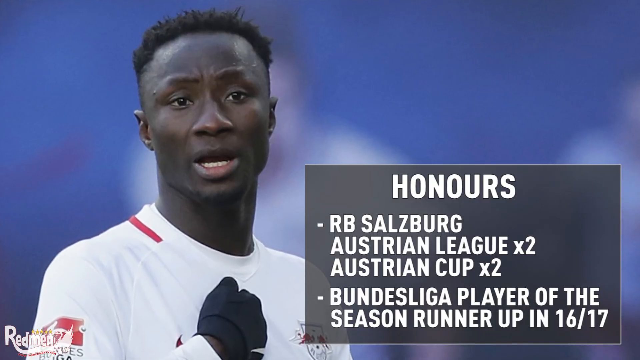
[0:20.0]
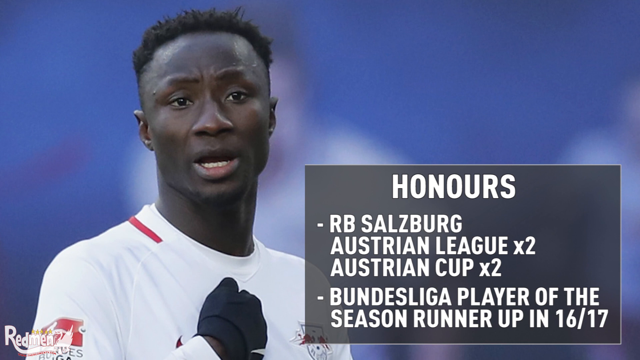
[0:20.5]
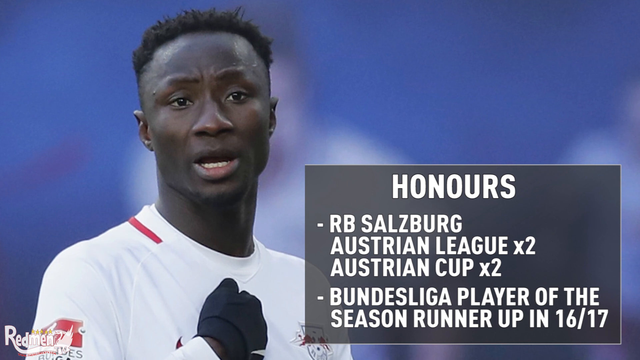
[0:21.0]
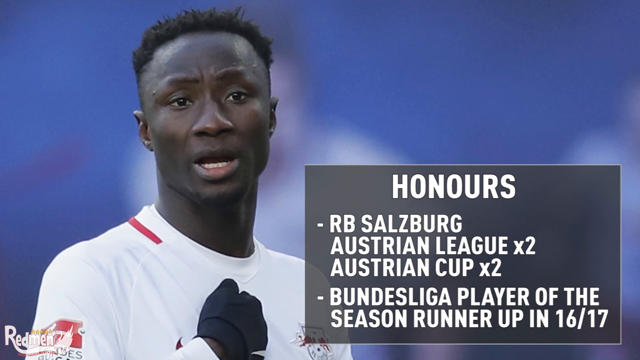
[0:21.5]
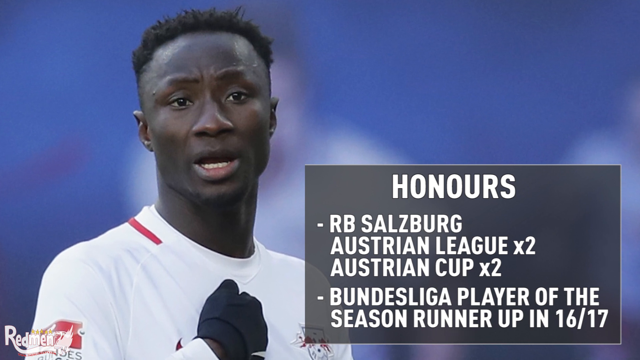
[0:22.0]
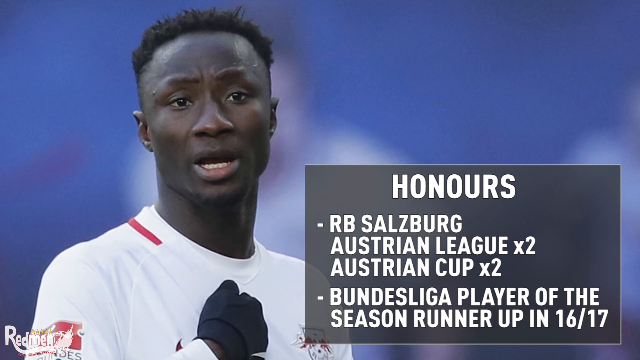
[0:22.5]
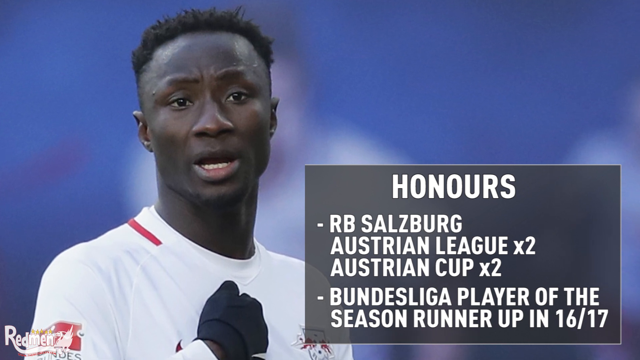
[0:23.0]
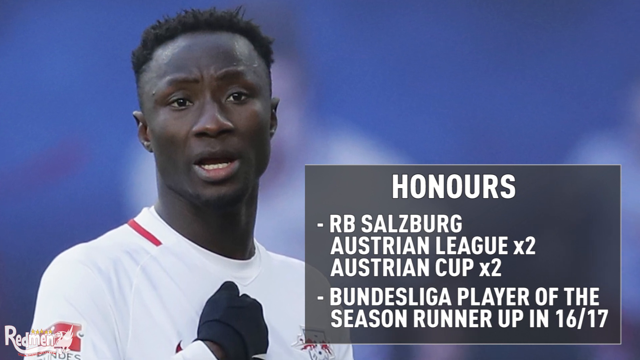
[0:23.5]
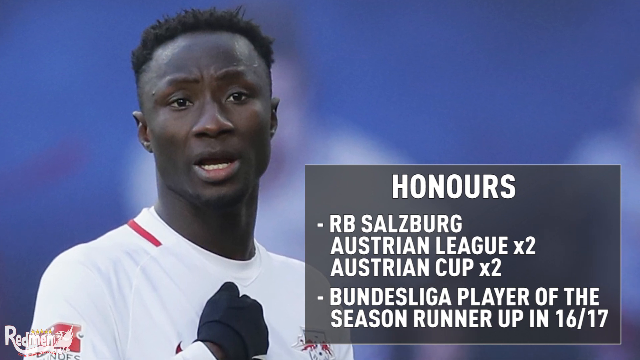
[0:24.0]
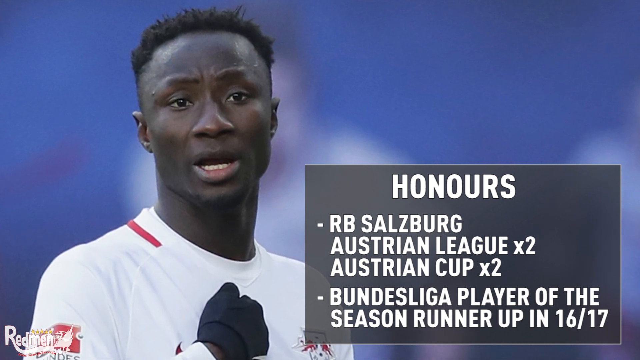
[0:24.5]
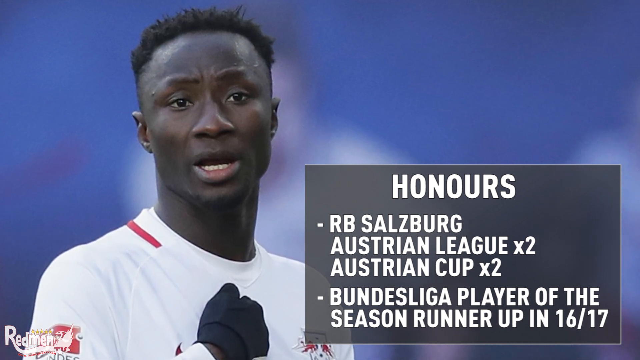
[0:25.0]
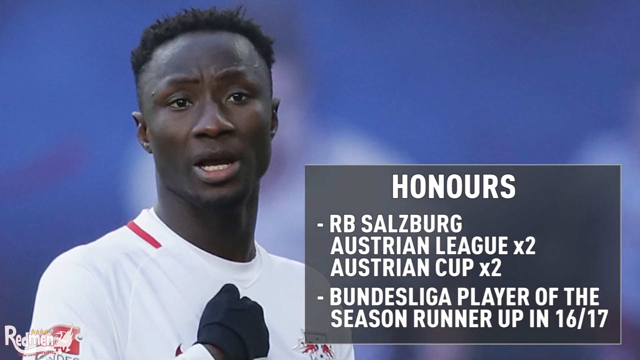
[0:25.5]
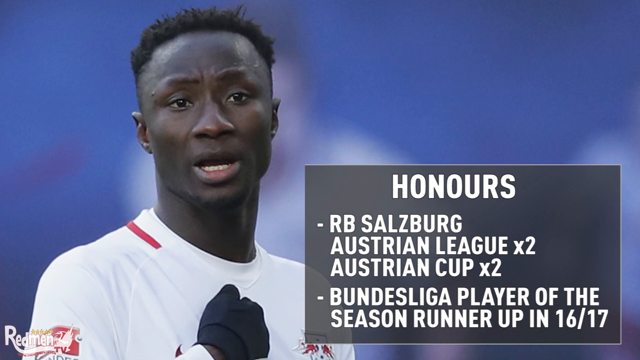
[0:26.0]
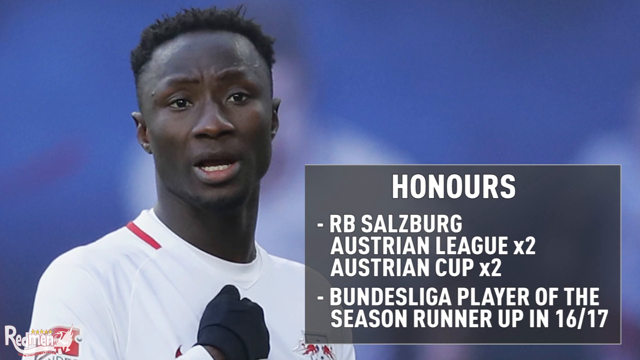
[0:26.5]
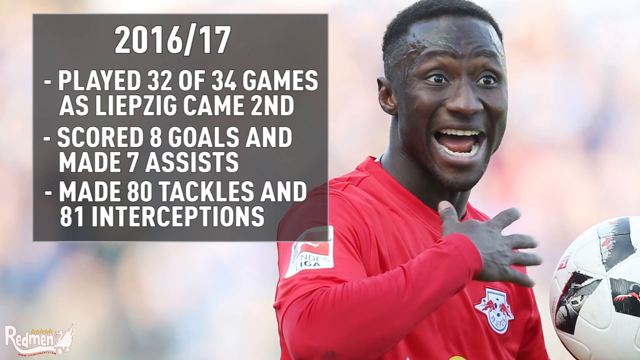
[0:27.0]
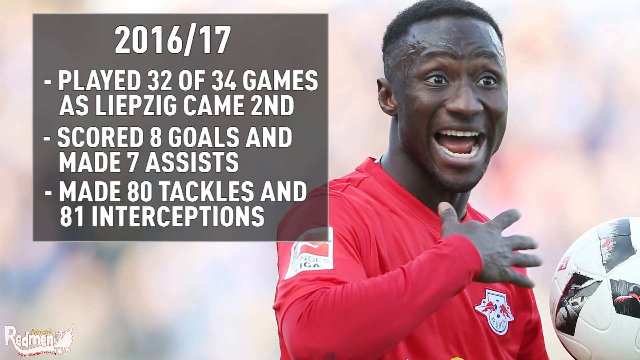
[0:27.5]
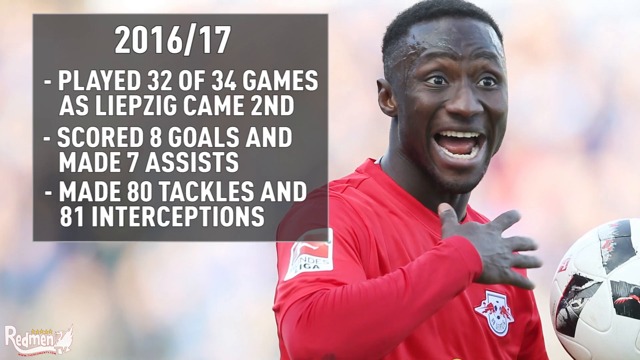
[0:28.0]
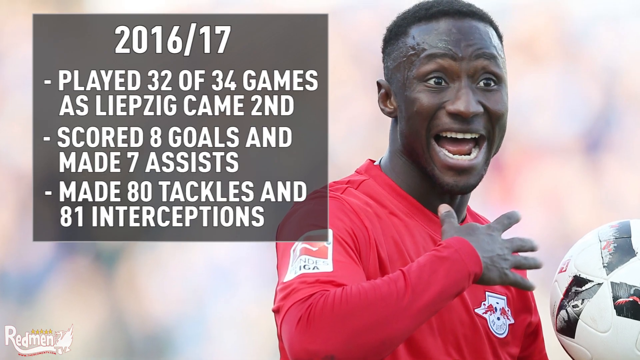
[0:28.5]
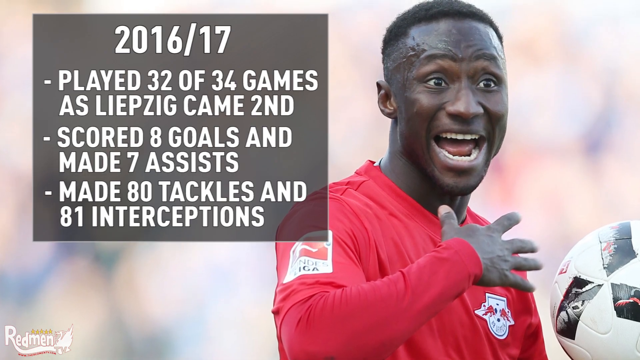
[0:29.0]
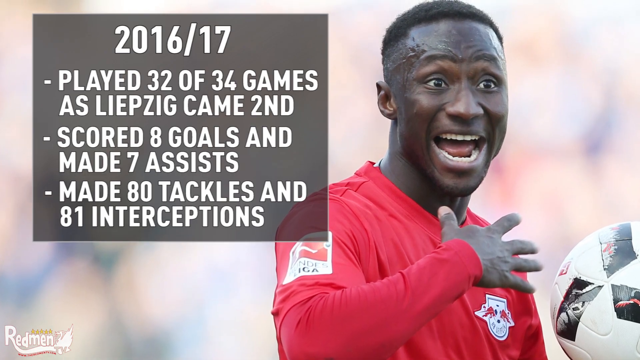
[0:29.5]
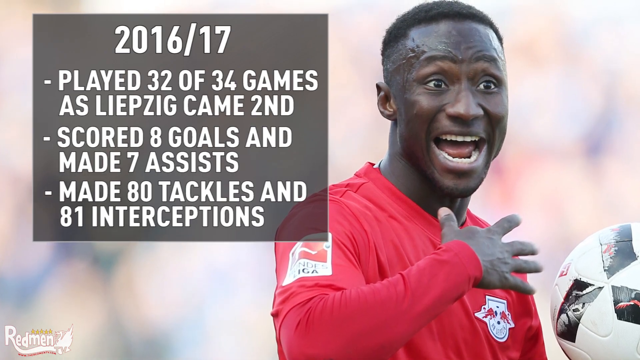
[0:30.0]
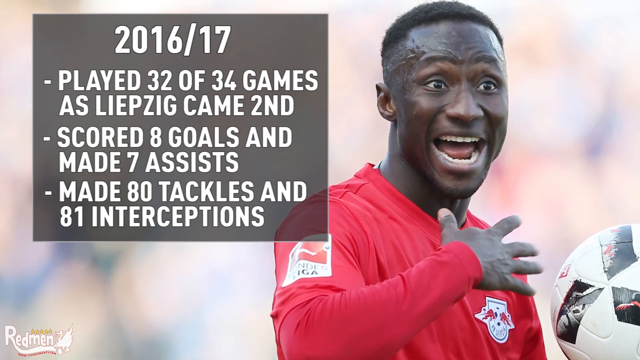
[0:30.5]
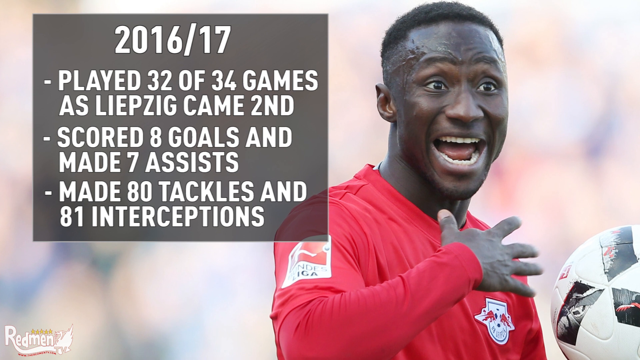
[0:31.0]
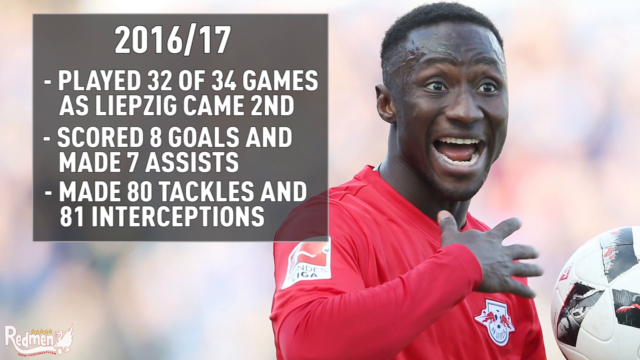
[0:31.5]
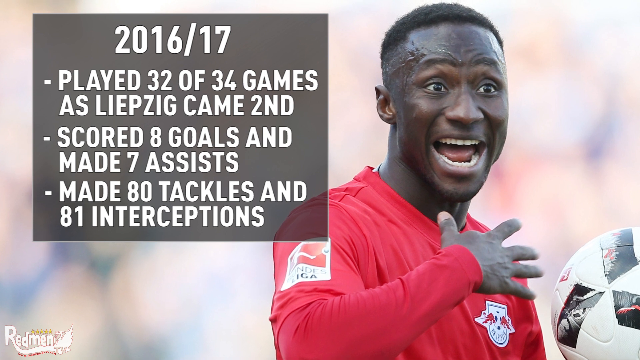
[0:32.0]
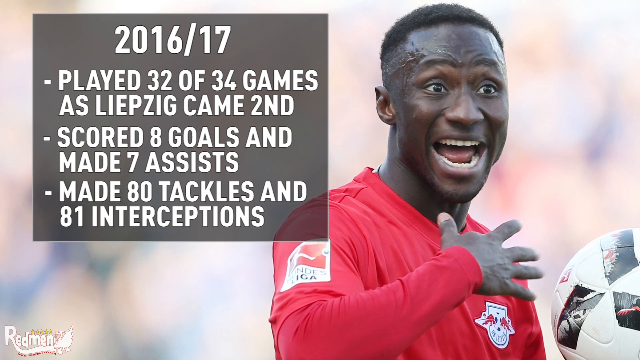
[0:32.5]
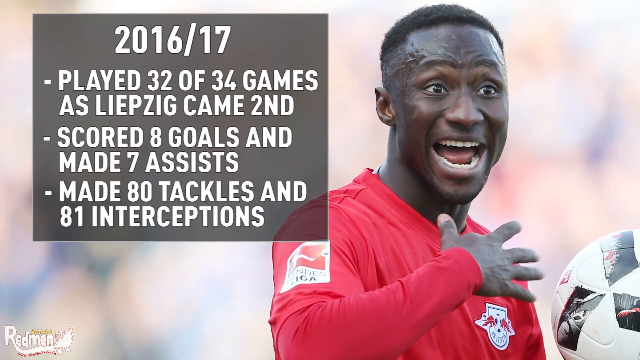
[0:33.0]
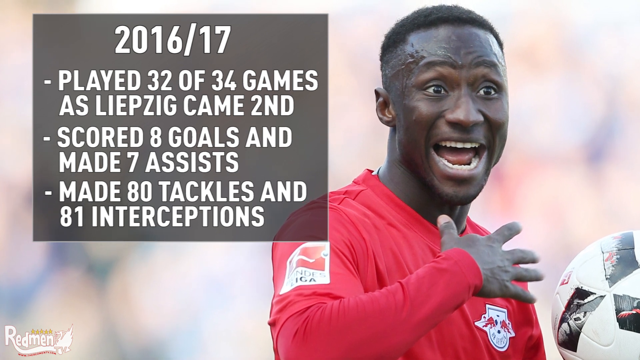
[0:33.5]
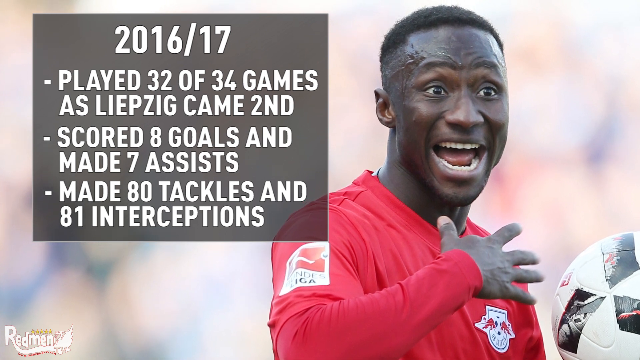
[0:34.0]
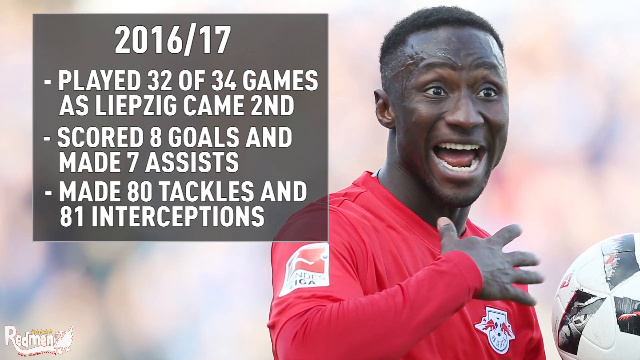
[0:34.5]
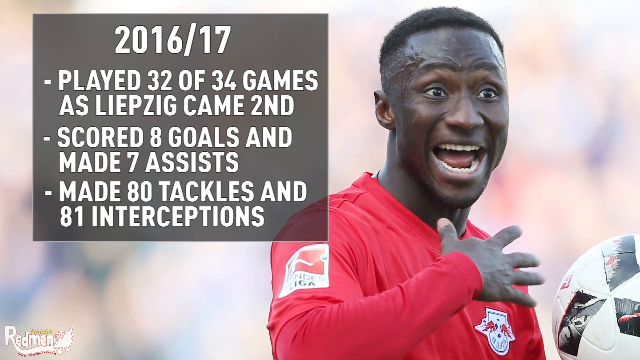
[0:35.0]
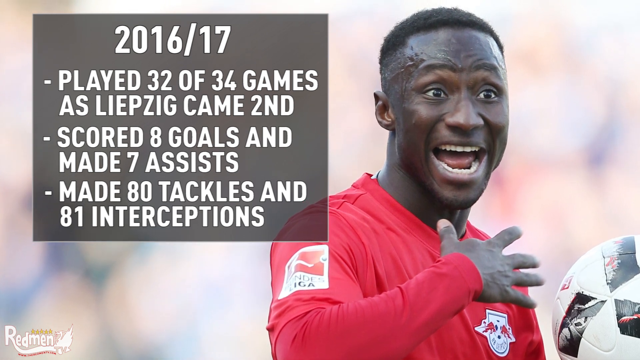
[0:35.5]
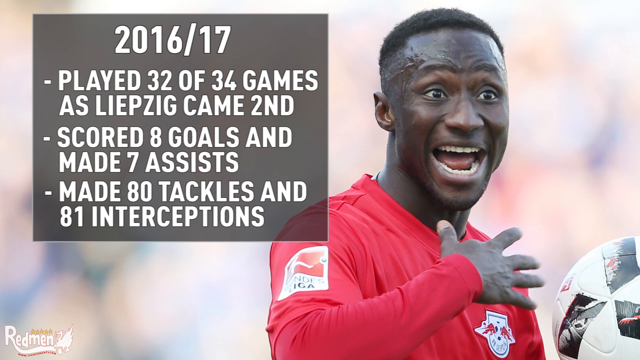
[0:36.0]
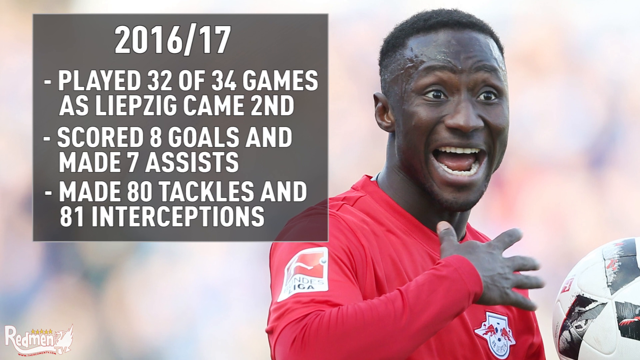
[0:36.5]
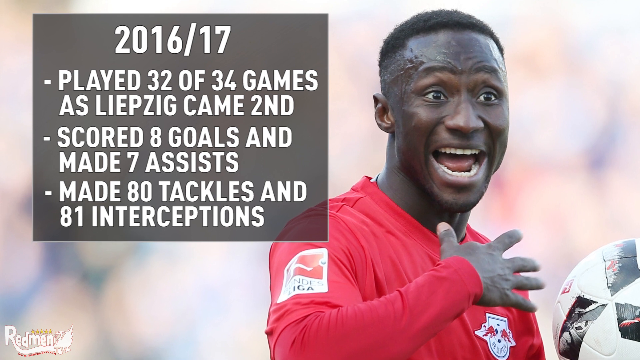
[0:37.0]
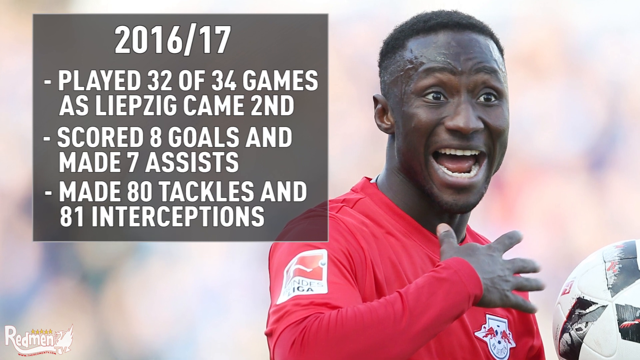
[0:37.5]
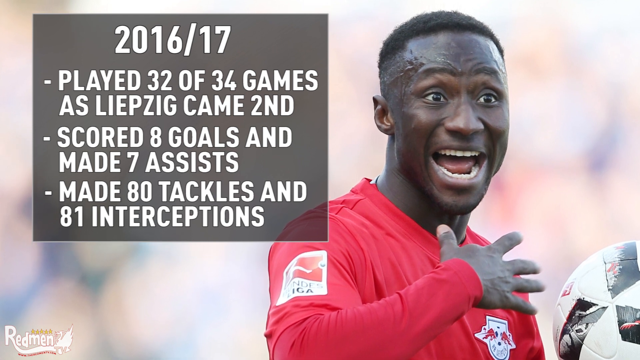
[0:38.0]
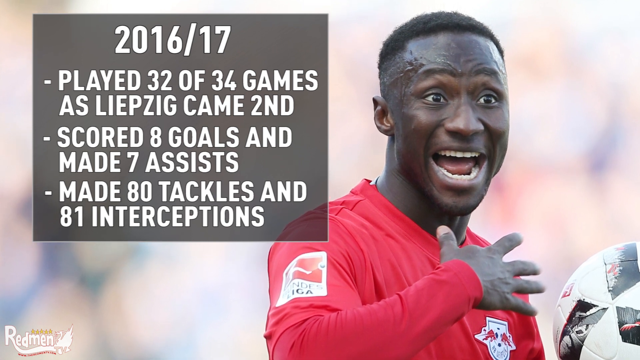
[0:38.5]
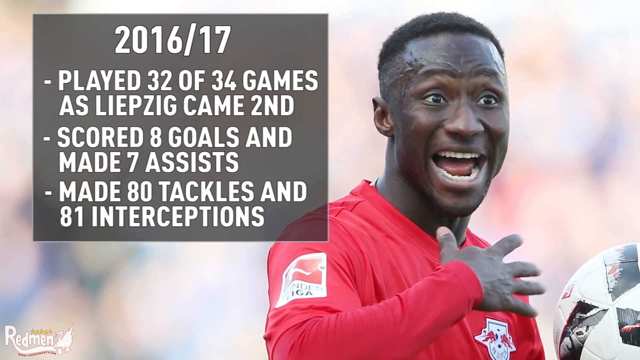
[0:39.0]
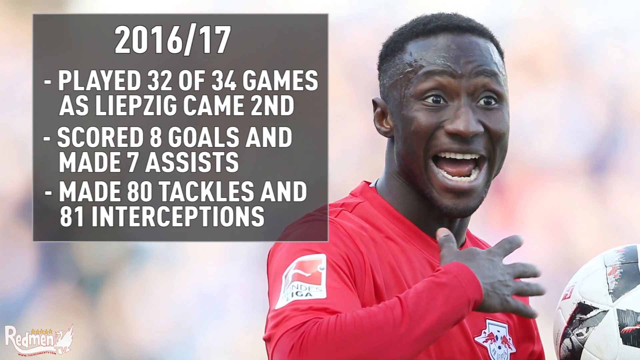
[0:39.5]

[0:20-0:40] The soccer player, an African-American man who appears to be wearing a red jersey, is shown with his honors: Australian League x2, Australia Cup x2, and player of the season runner-up in 2016-17. "RedMintTV" appears at the bottom of the screen. The stats continue: in 2016-17 he played 32 of 34 games as Leipzig came second, scoring eight goals with seven assists, and making 80 tackles and 81 interceptions.